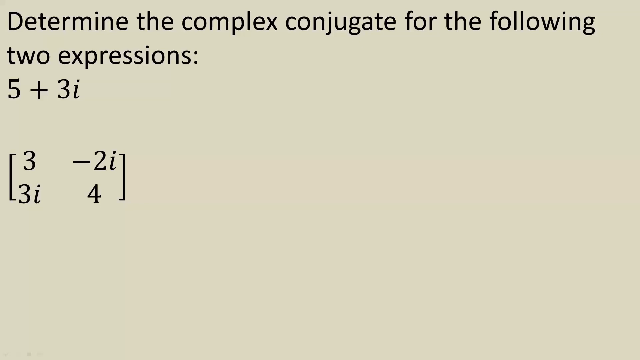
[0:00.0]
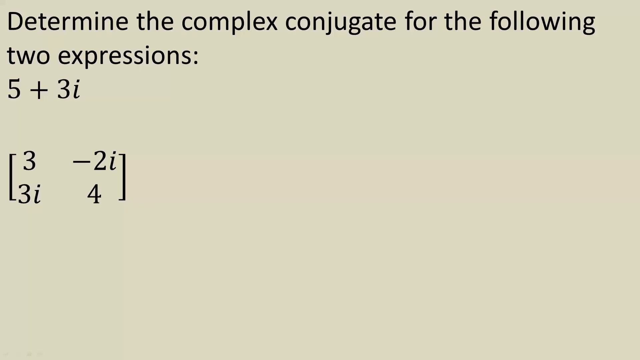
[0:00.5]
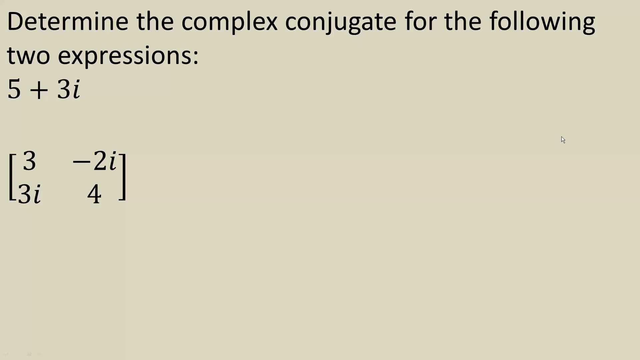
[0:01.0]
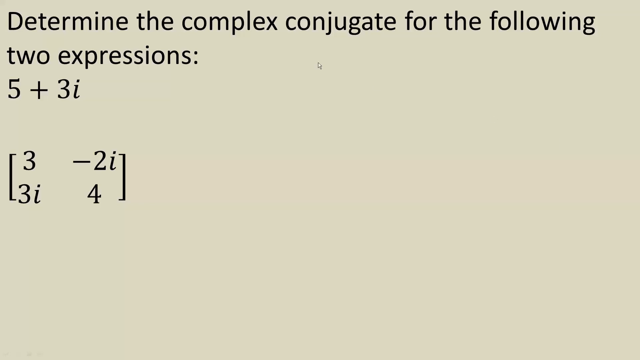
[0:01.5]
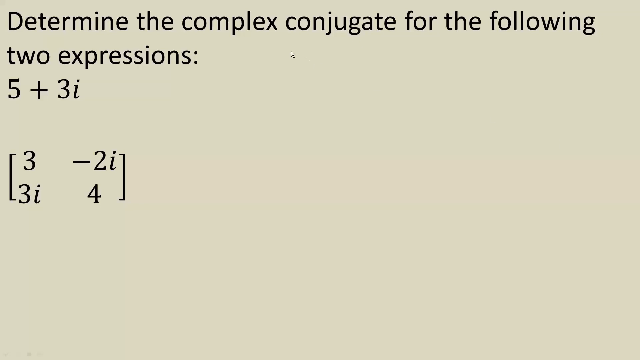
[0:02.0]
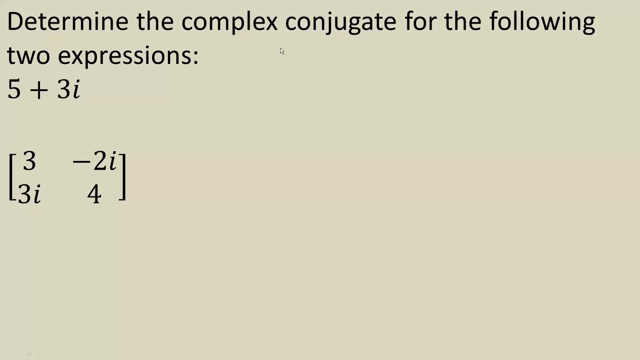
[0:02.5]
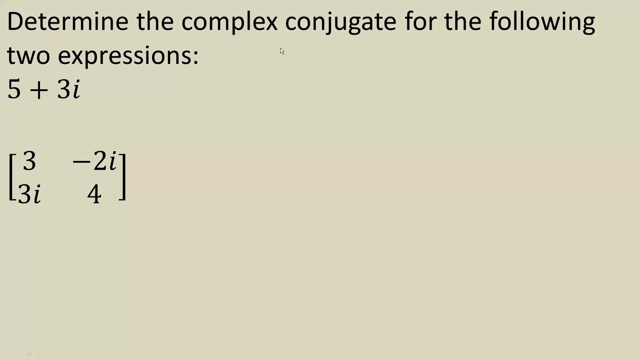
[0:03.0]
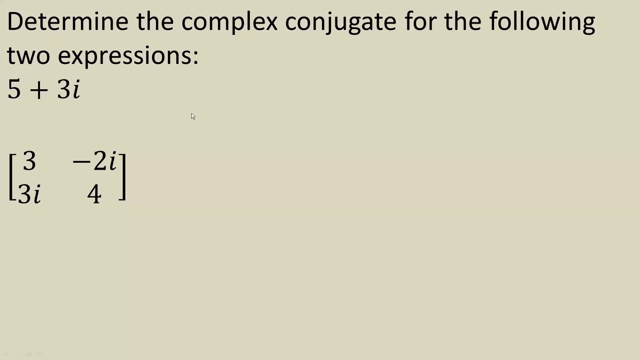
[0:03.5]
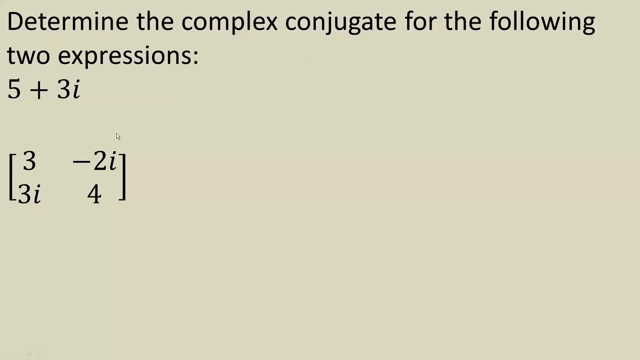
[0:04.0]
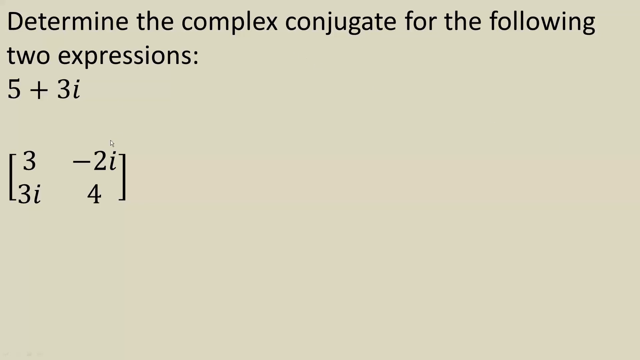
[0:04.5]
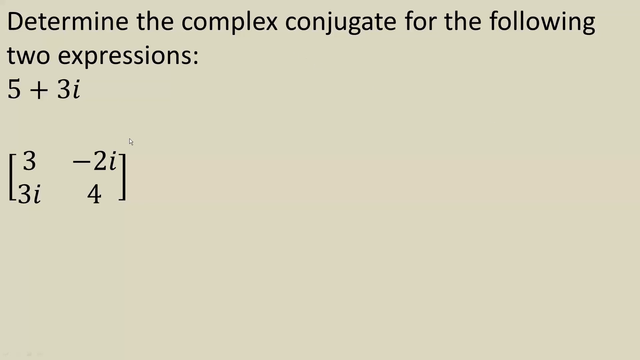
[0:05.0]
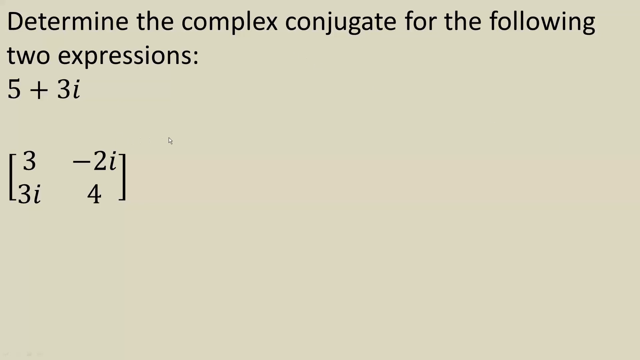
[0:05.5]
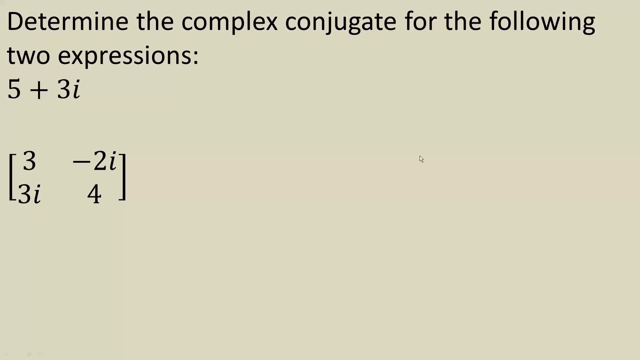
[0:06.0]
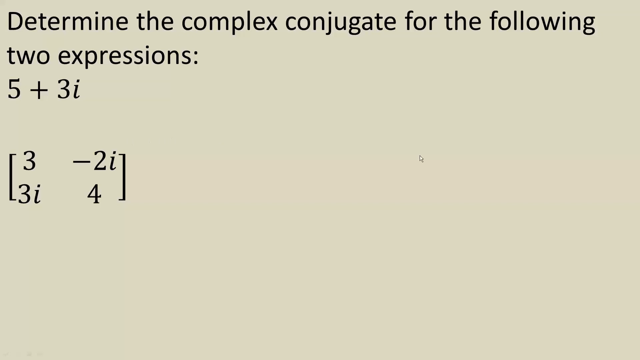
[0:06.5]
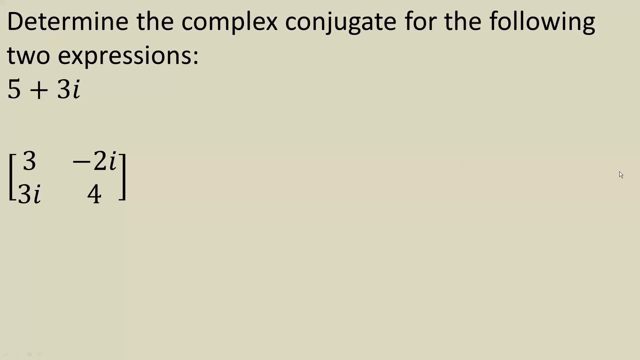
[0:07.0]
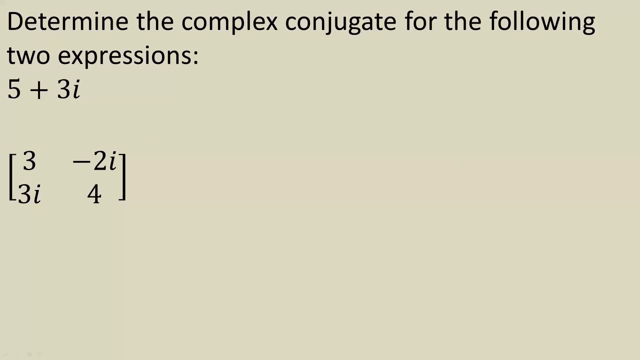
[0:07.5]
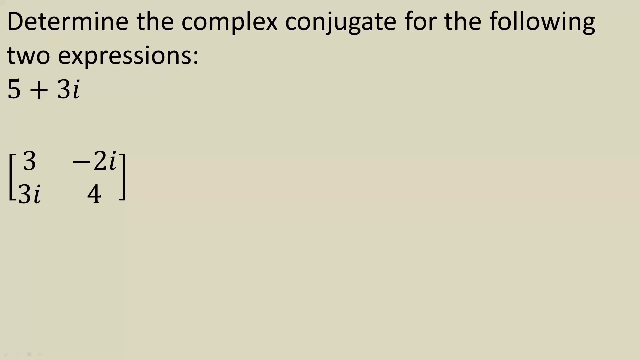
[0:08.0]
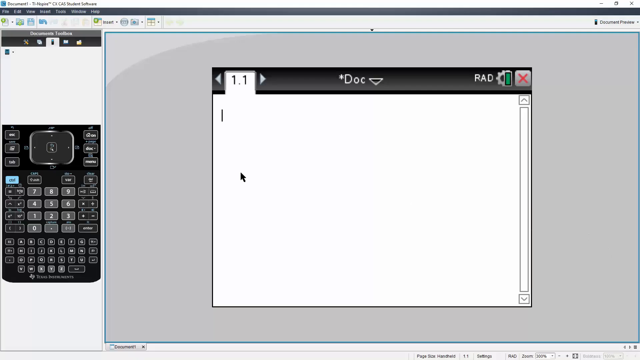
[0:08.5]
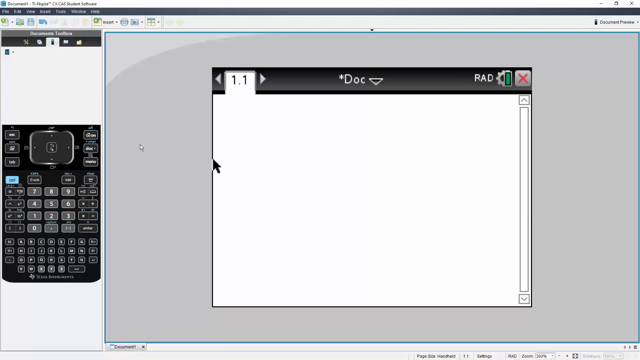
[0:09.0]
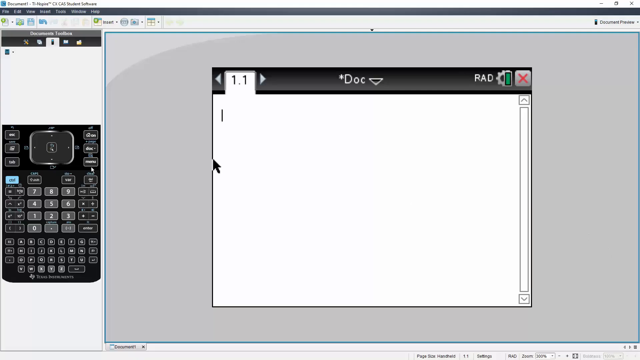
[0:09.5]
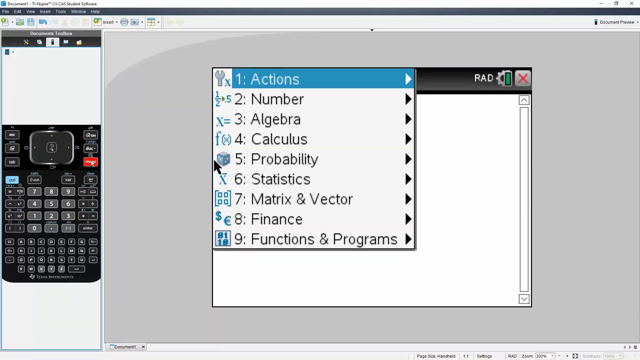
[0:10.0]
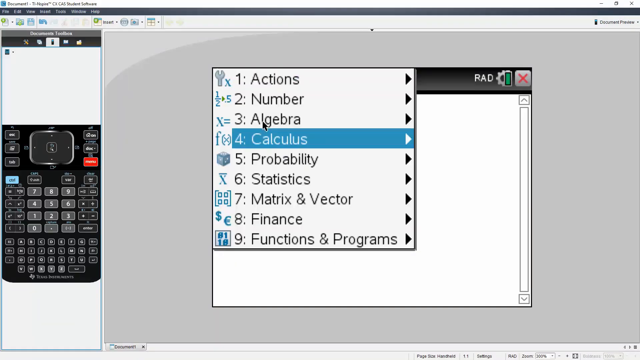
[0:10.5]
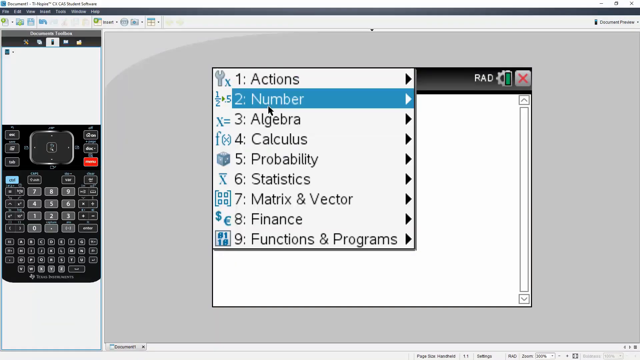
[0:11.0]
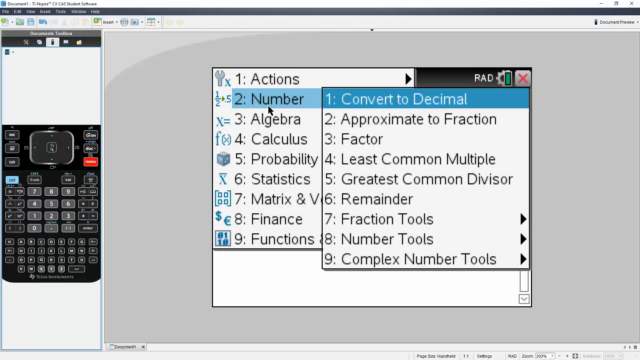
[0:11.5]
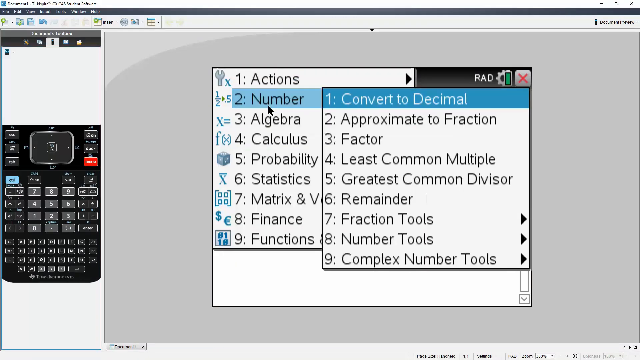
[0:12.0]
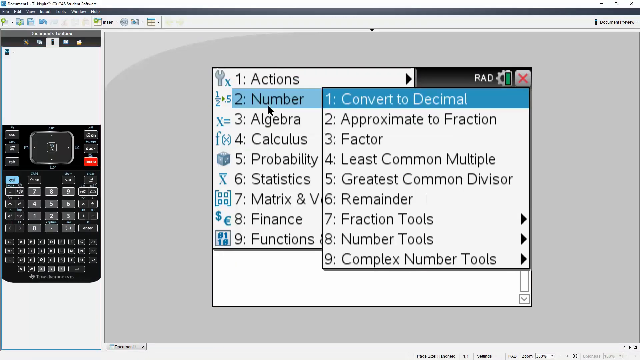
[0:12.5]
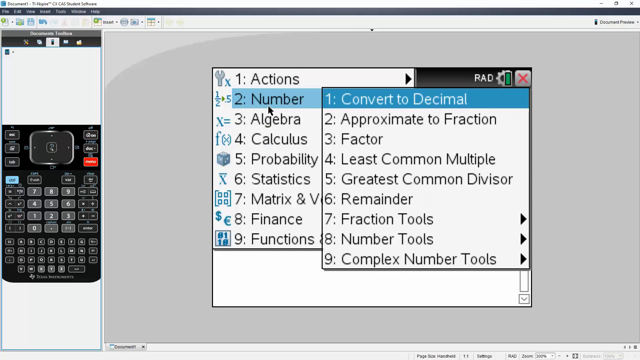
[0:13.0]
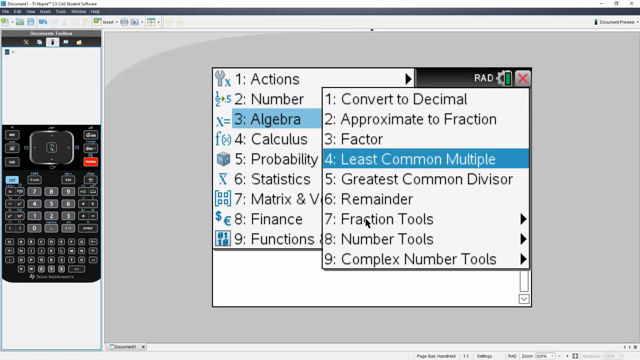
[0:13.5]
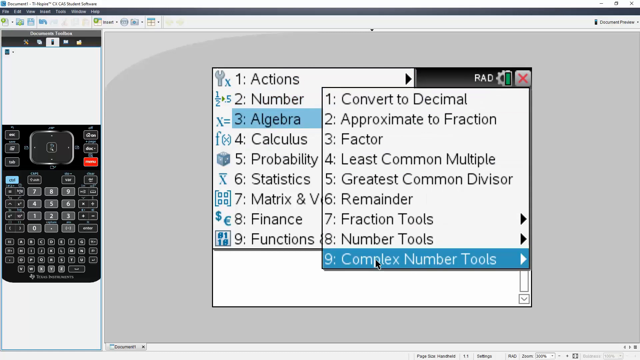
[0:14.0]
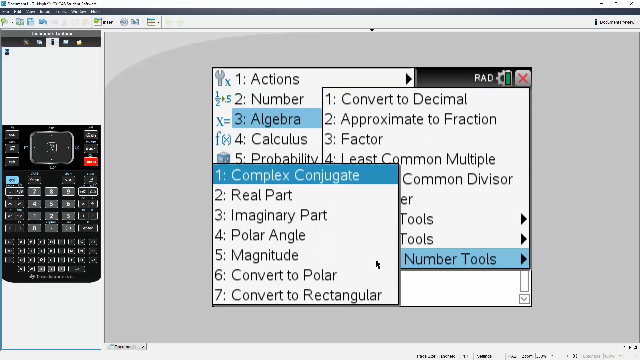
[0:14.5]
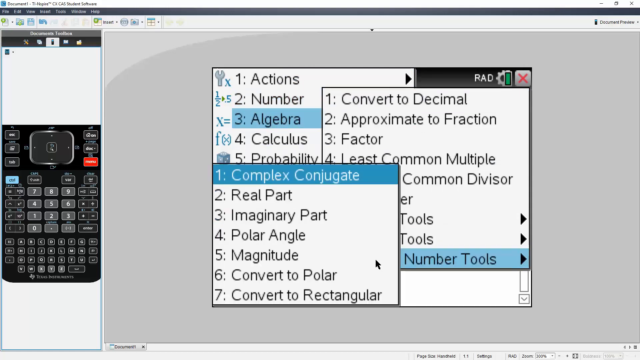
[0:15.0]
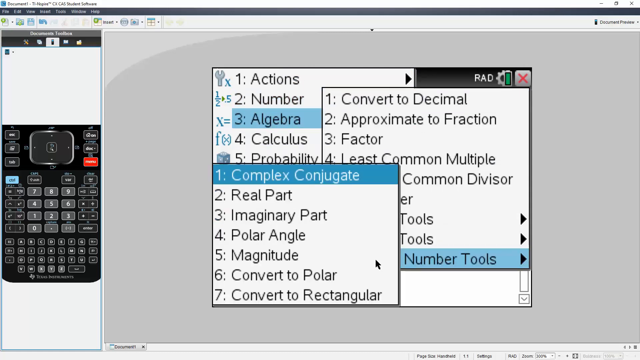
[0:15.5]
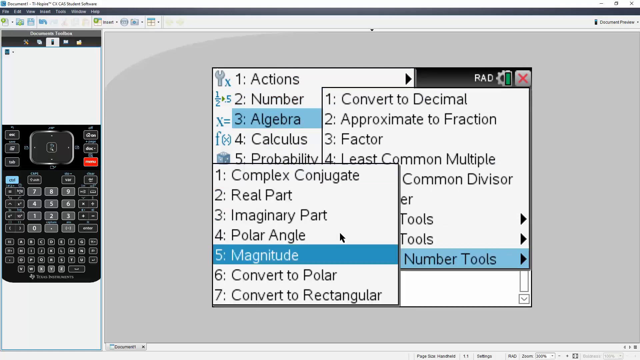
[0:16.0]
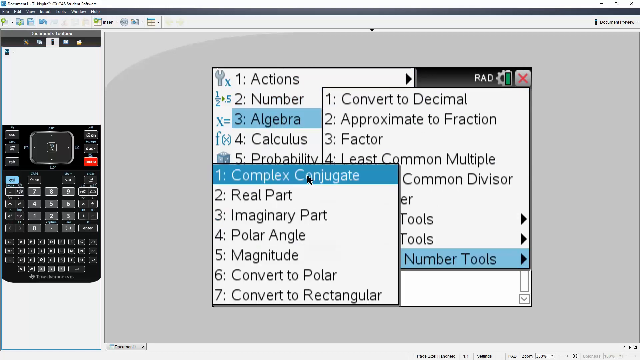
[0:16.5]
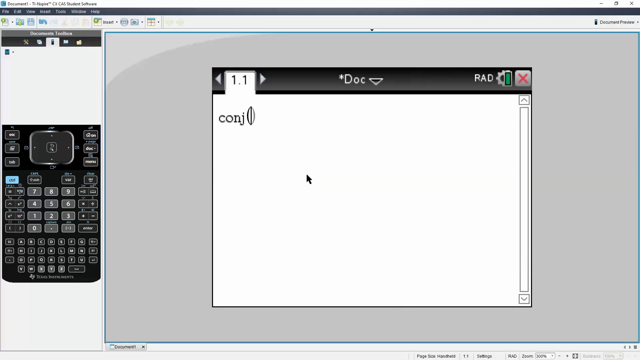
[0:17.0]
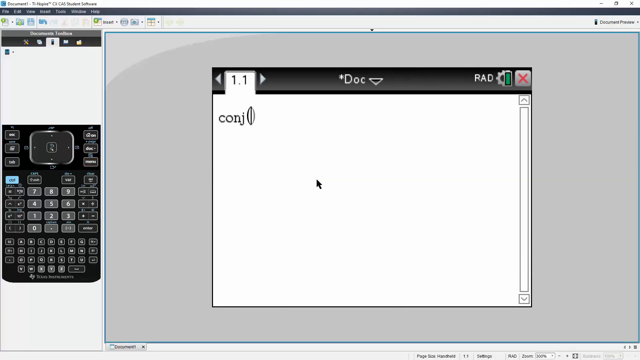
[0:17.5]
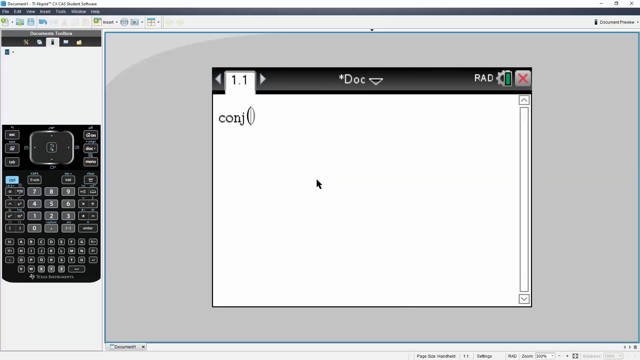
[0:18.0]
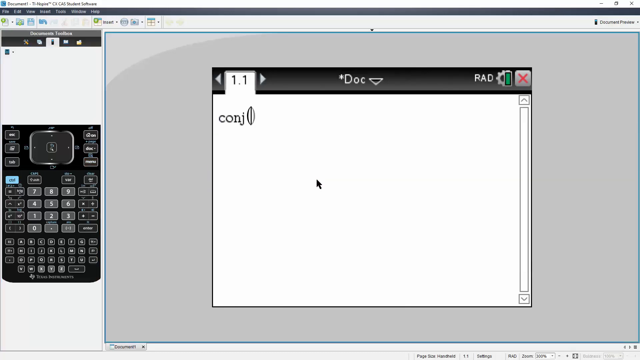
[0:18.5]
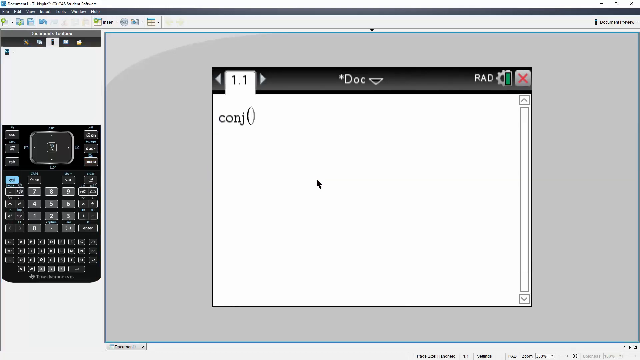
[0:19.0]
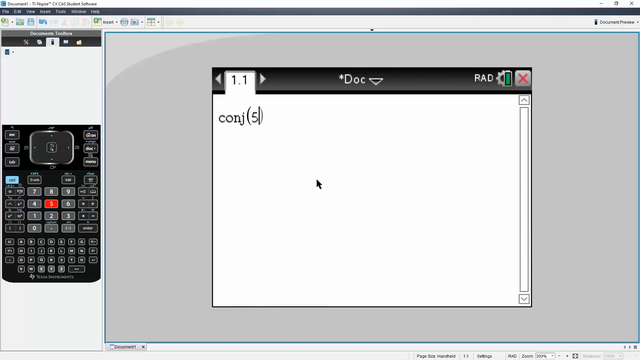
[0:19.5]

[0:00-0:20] The video opens on a tan background with text reading "determine the complex conjugate for the following two expressions." The expressions include 5 plus 3, 3i, and 3 minus 2i, along with 3i and 4. It is a math problem being worked out on screen, with a mouse pointer moving around. The view then switches to a different screen showing an actions menu, from which different types of math can be selected. On the left side of the screen is the face of a calculator, and the pad in the middle of the screen appears to be the calculator keys. The menu lists actions, number, algebra, calculus, probability, statistics, matrix and vector, finance, and functions and programs. The user apparently selects the number menu, which opens a flyout menu to the right whose first option is convert to decimal. The pointer moves down to complex number tools, another flyout menu, and the complex conjugate option is selected.